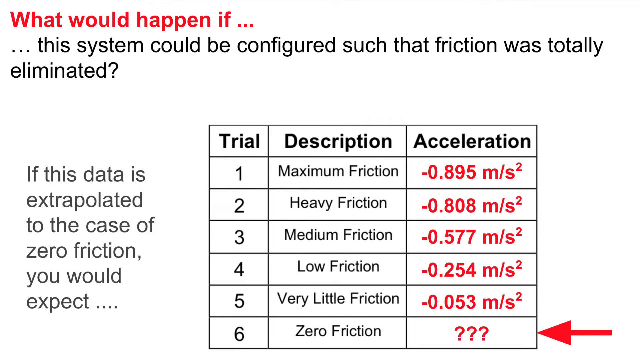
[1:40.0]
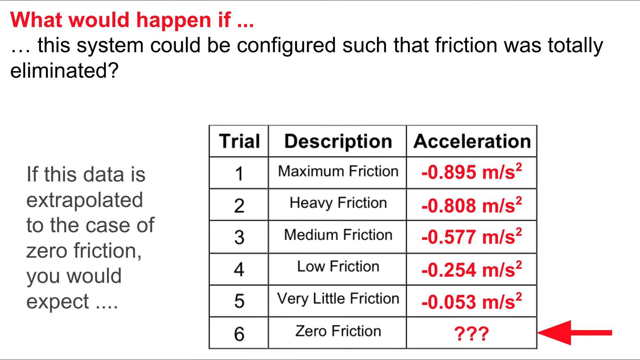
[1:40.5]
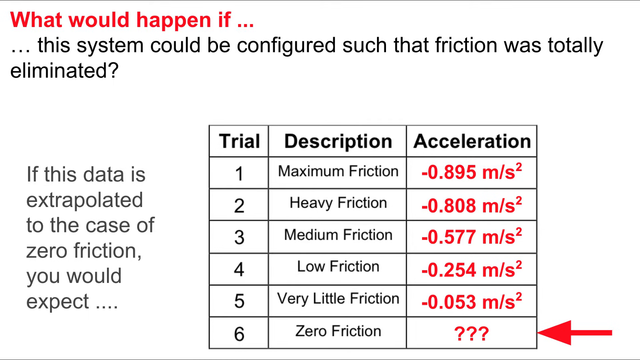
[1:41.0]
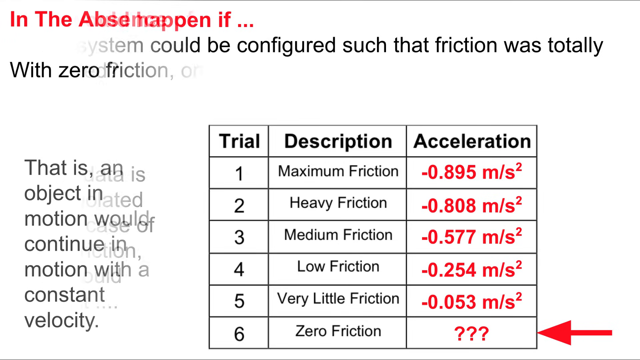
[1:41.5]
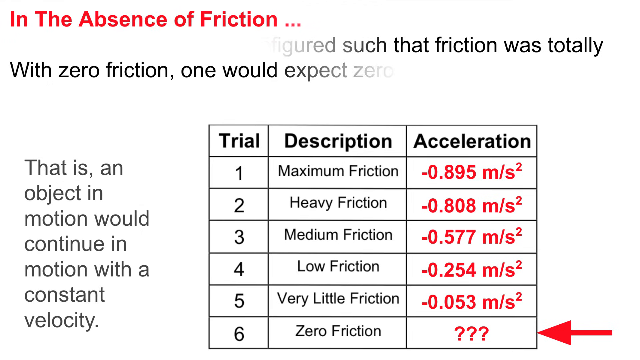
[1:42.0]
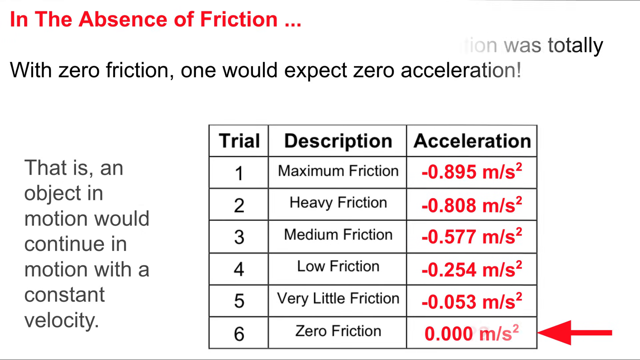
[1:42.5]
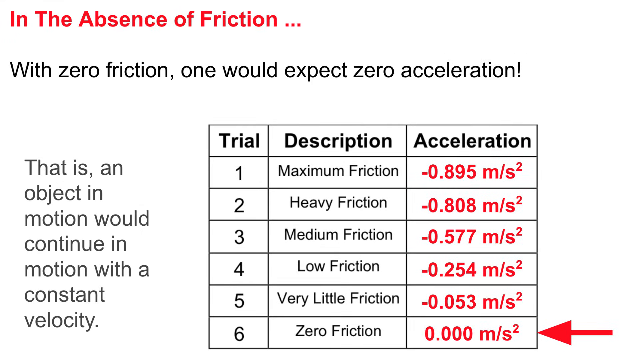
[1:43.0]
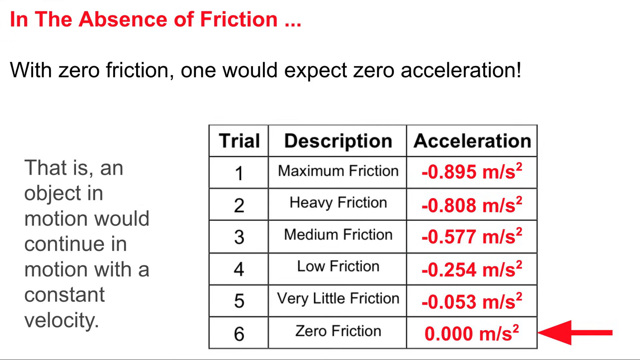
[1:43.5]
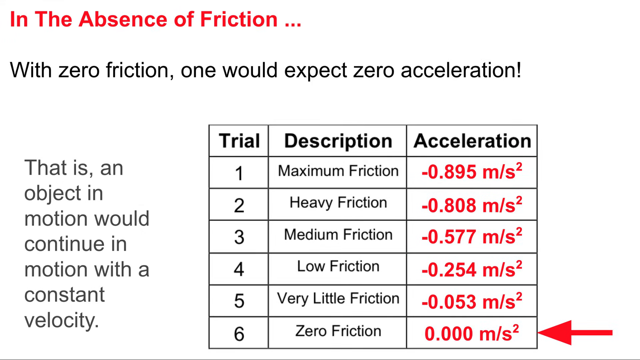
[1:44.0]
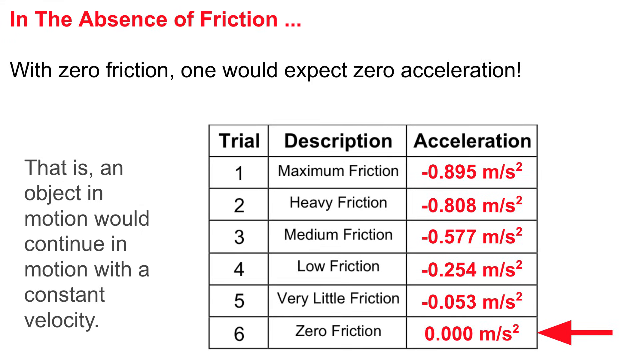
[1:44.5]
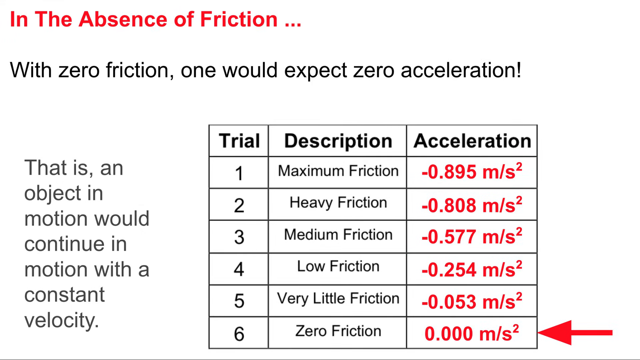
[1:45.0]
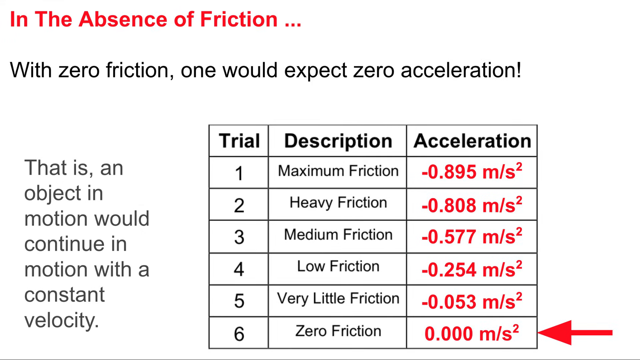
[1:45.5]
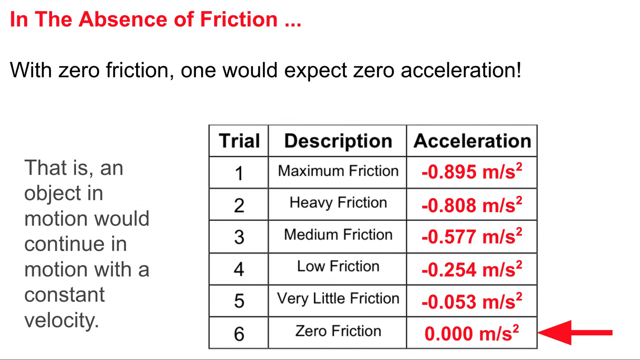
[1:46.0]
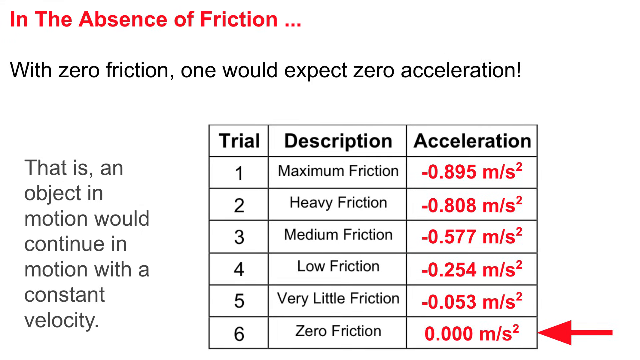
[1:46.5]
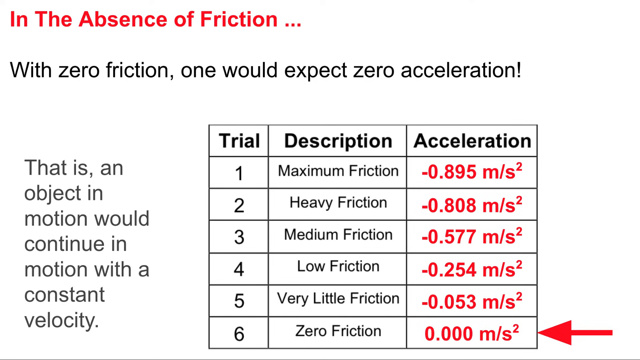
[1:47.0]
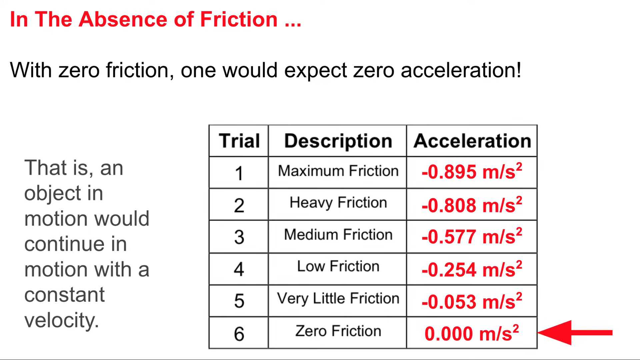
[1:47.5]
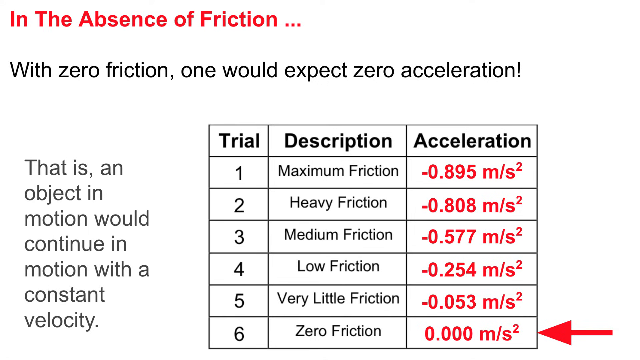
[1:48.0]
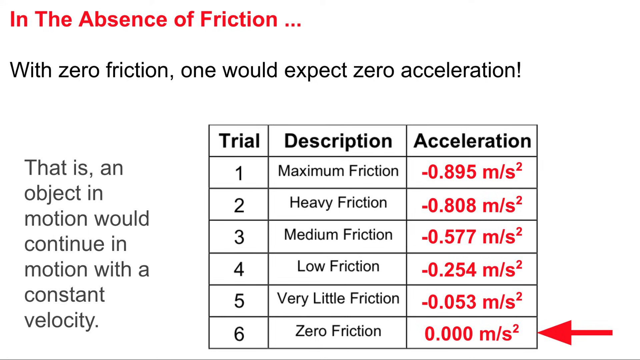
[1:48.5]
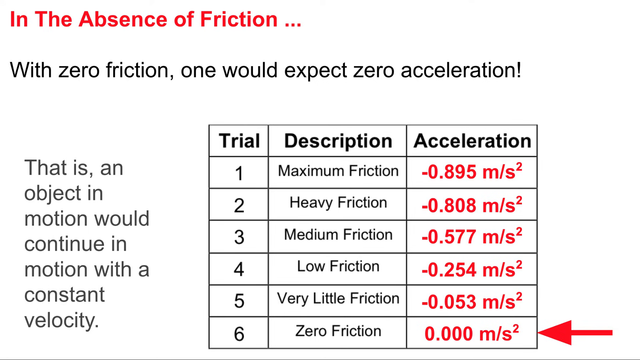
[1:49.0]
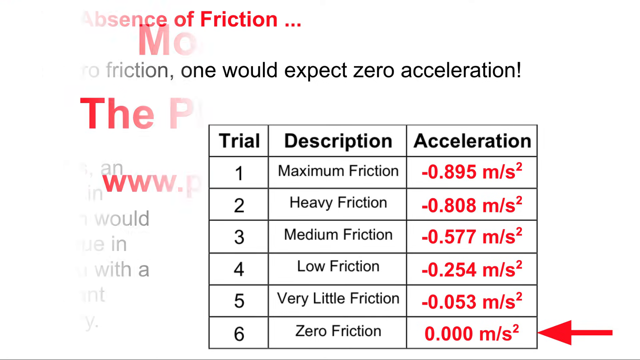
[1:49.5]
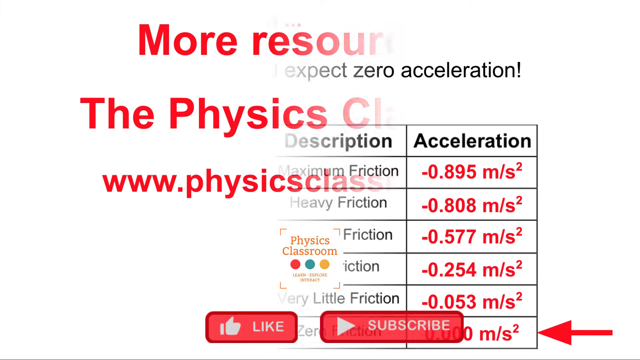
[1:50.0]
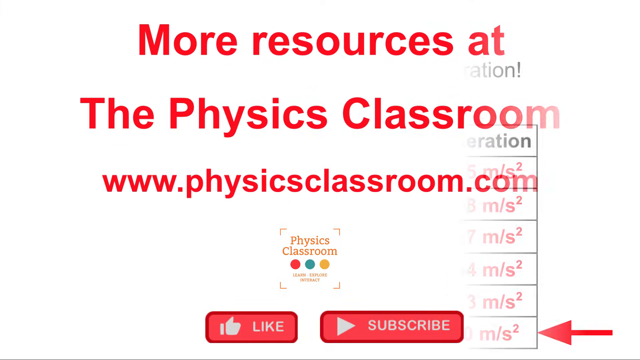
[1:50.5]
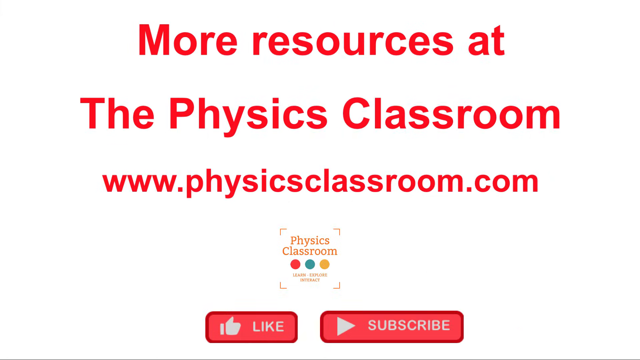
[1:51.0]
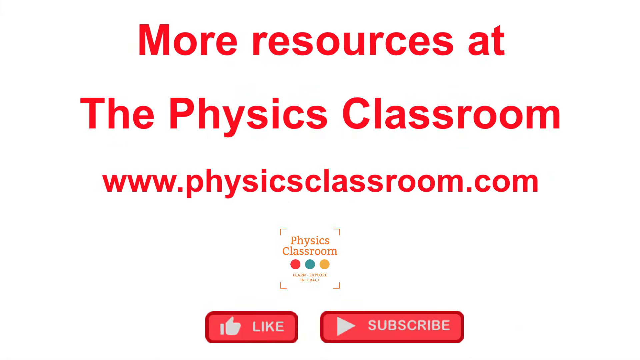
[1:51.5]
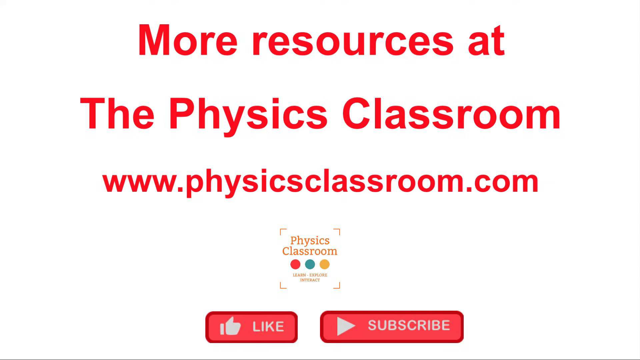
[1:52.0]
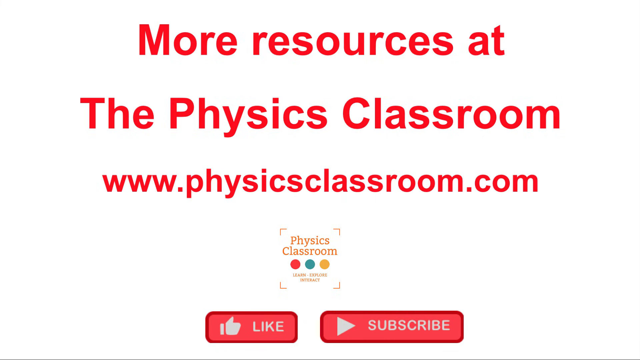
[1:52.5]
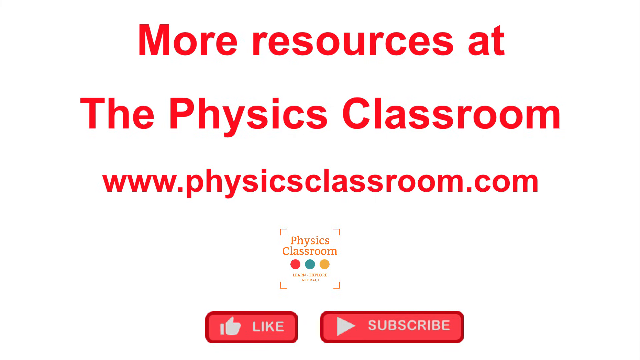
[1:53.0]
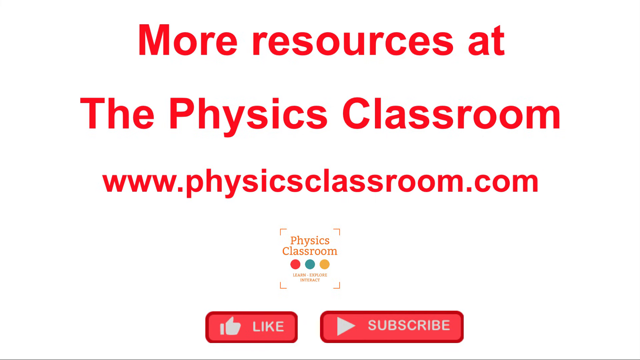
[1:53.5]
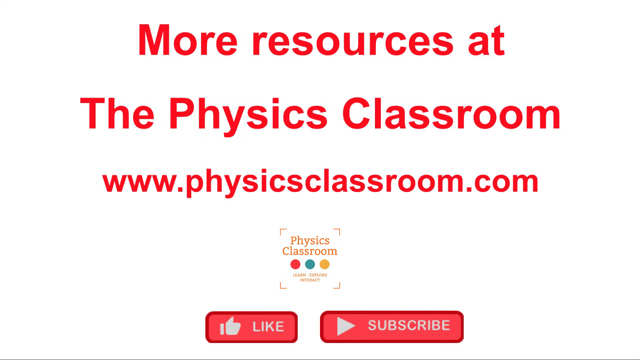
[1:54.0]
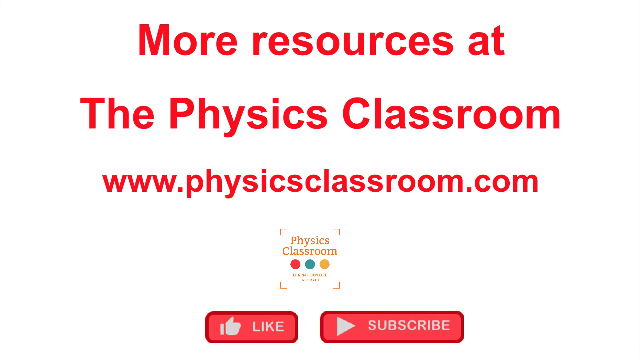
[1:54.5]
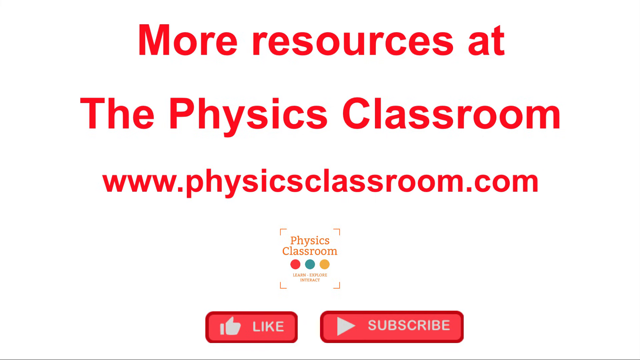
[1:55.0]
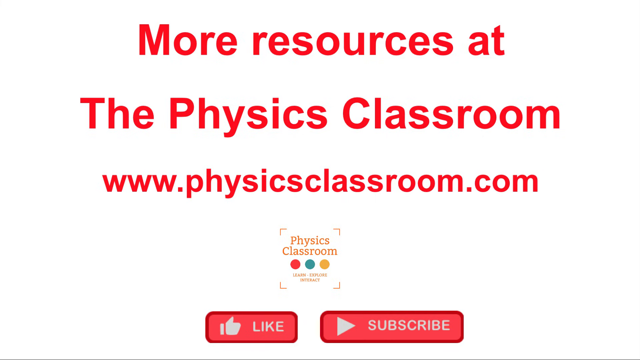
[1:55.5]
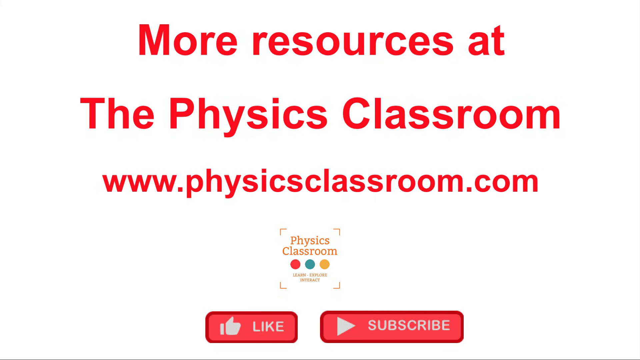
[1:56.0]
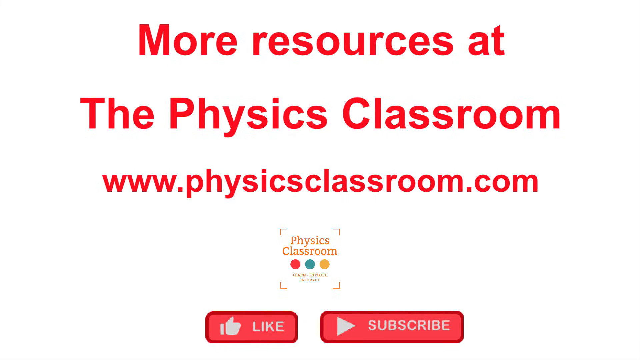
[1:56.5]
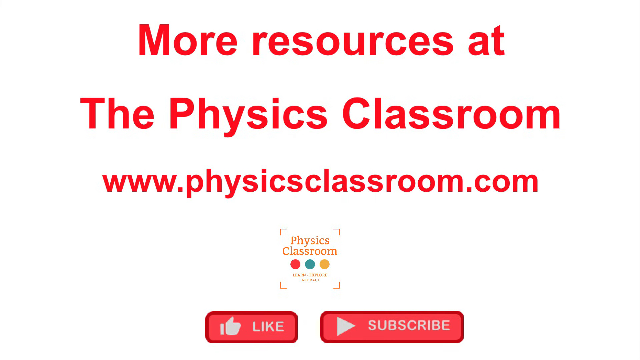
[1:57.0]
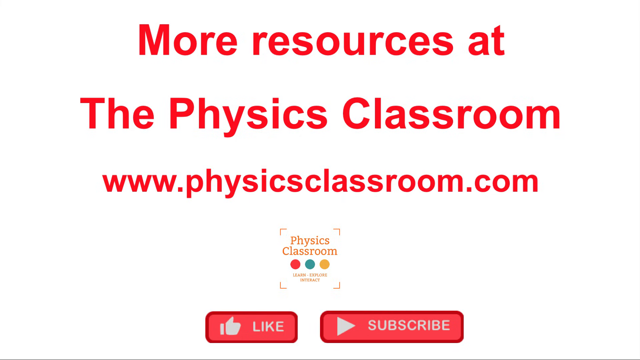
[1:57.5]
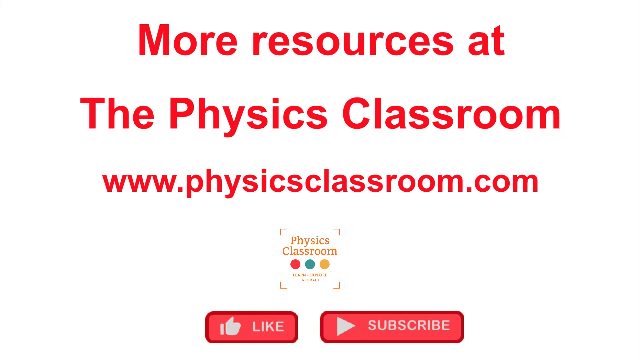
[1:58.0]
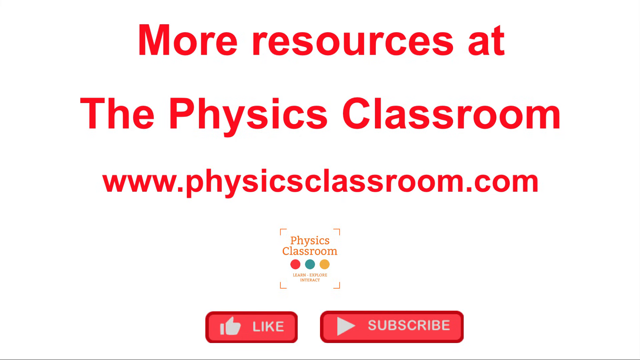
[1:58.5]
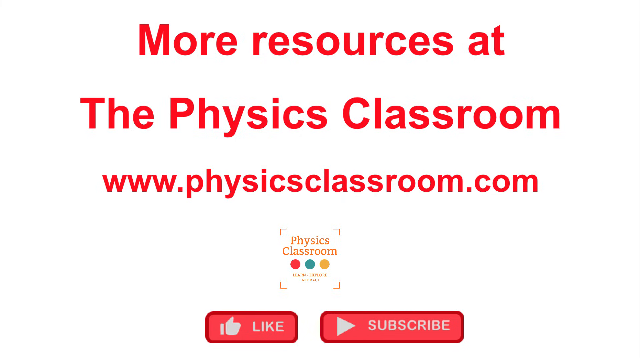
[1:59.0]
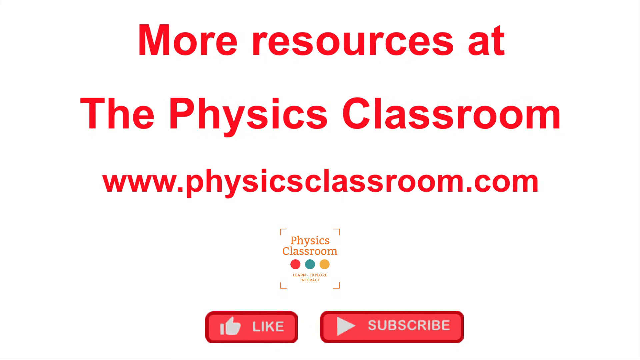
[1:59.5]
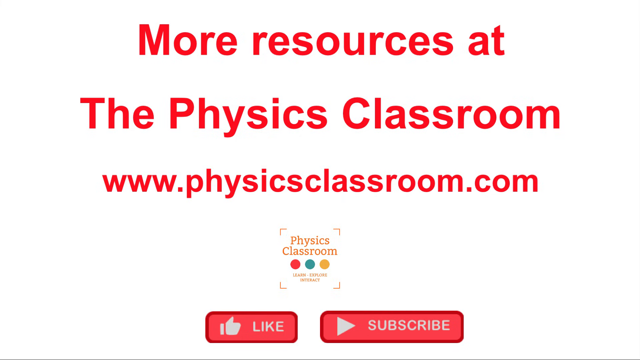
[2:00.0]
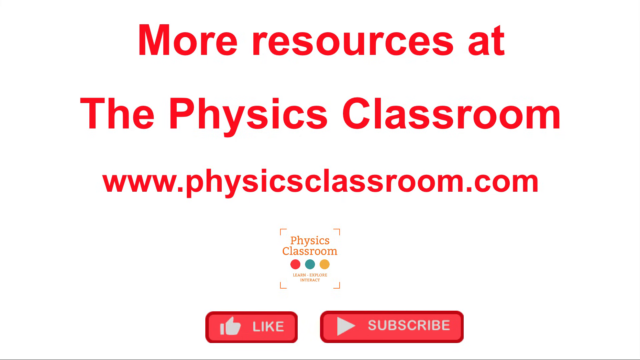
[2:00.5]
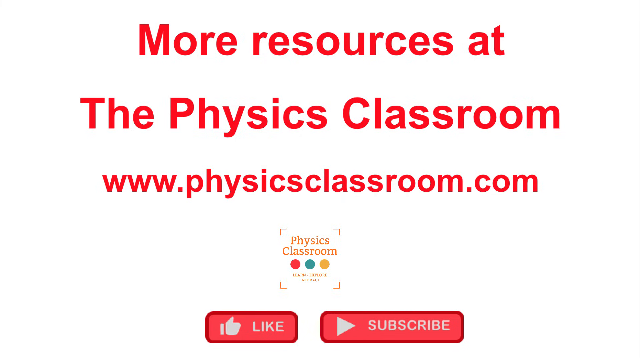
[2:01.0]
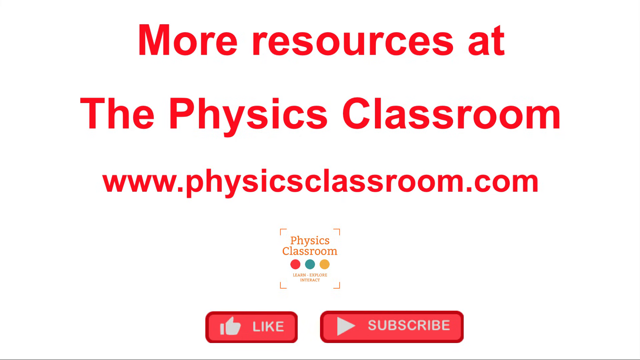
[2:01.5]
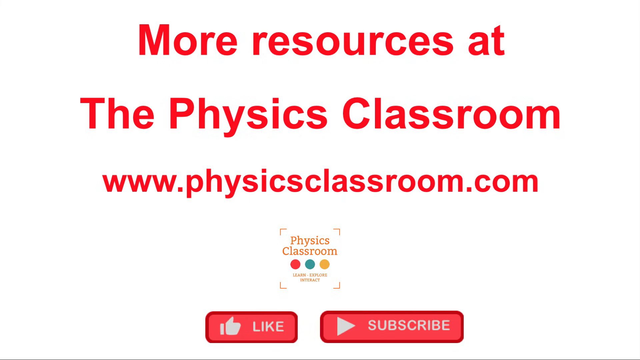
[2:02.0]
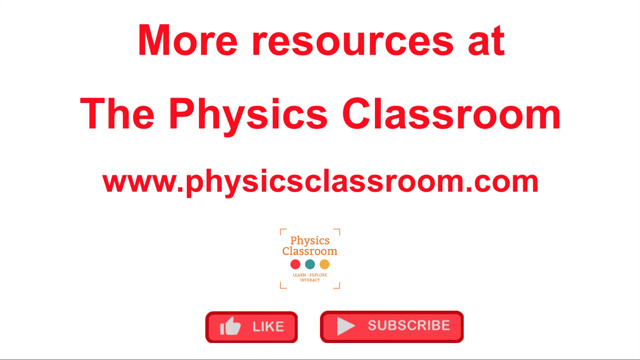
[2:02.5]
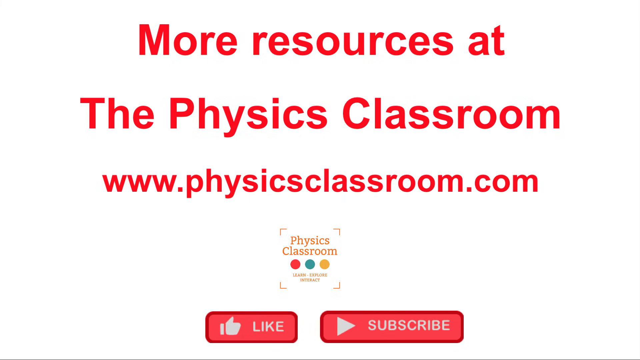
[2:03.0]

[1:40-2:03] In the concluding part, trial 6 with zero friction shows an acceleration of 0.00 meters per second squared. On the screen, a question asks what would happen if the system could be configured so that friction was totally eliminated, and the answer given is that with zero friction, one would expect zero acceleration. The final screen directs viewers to more resources at www.physicsclassroom.com.